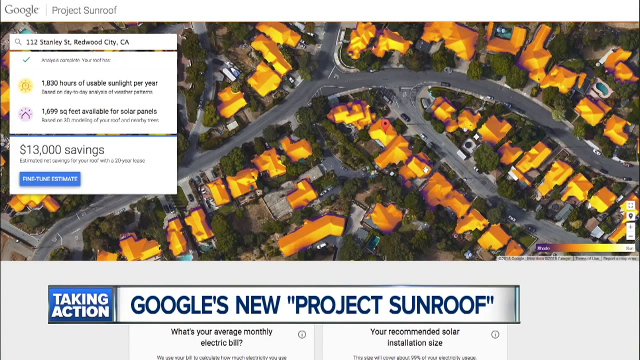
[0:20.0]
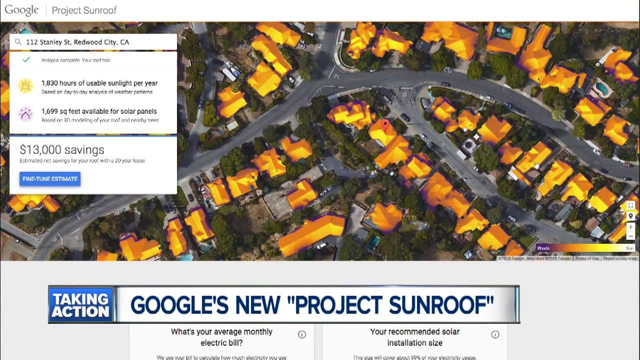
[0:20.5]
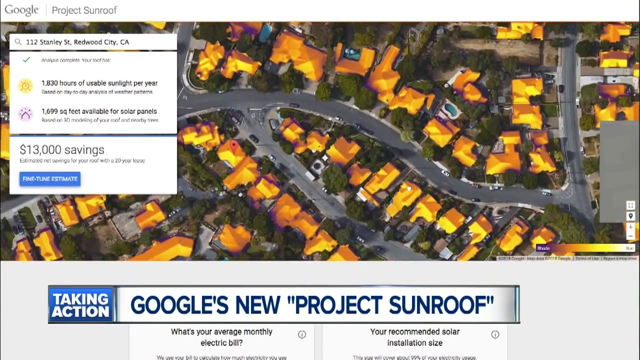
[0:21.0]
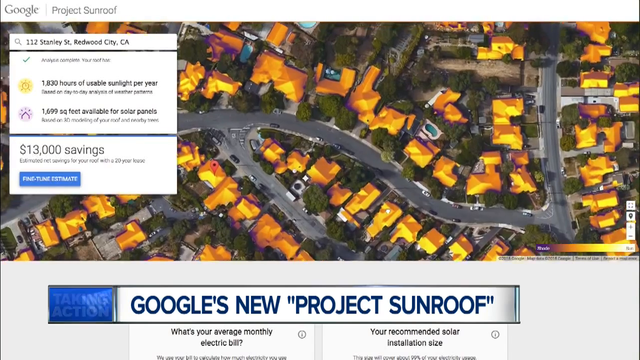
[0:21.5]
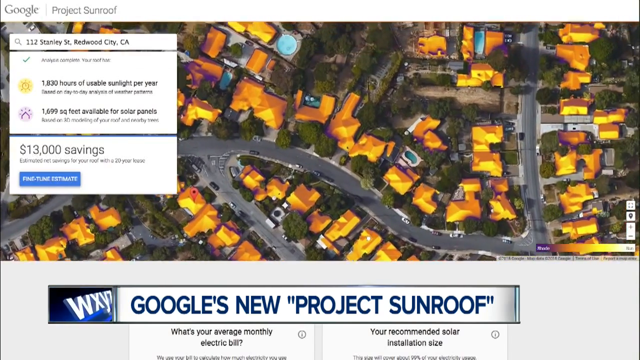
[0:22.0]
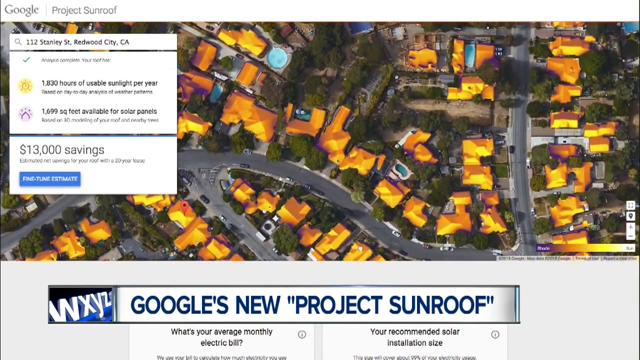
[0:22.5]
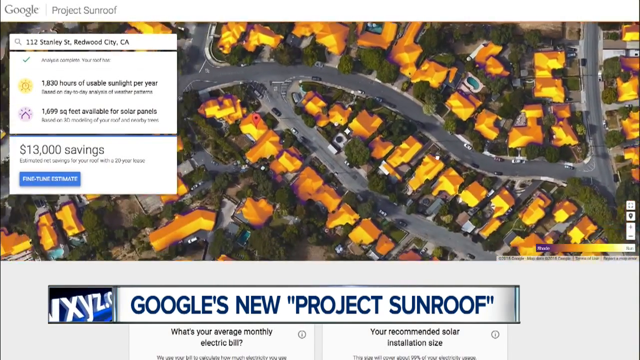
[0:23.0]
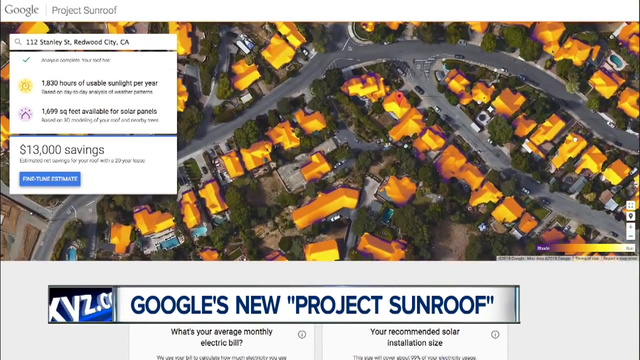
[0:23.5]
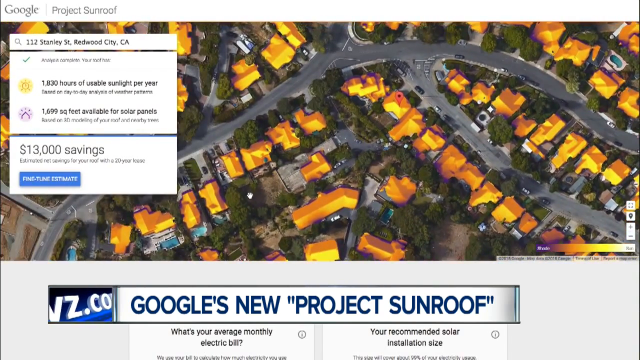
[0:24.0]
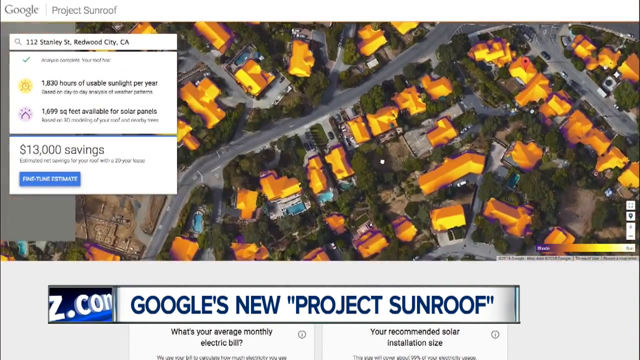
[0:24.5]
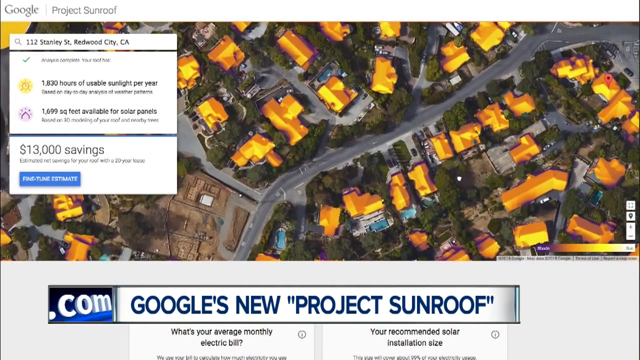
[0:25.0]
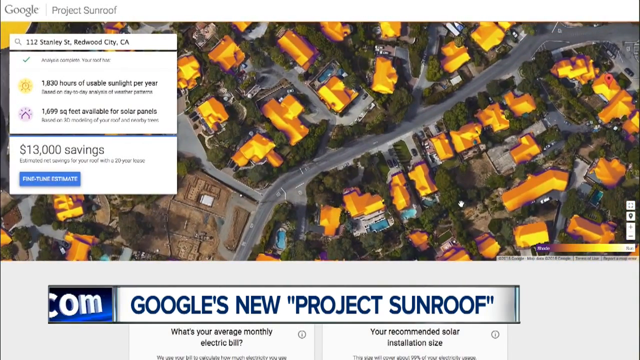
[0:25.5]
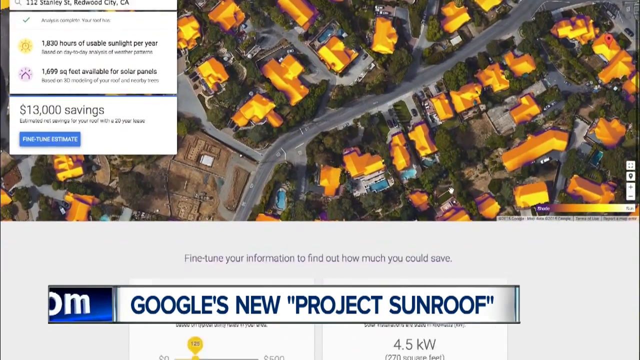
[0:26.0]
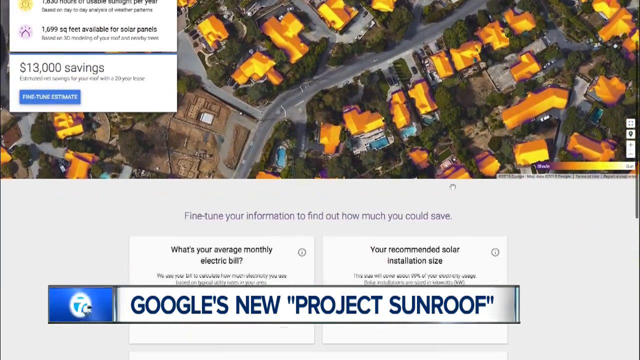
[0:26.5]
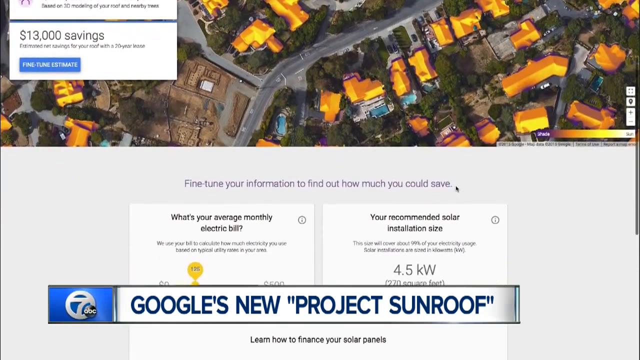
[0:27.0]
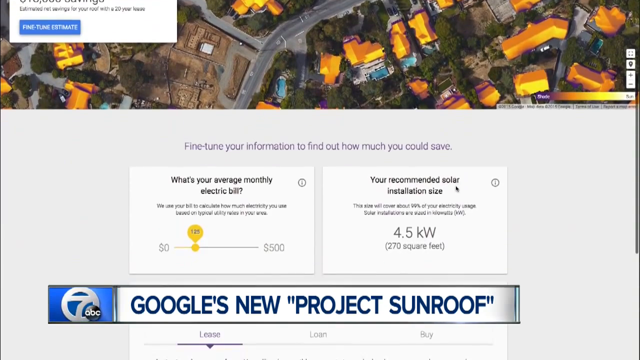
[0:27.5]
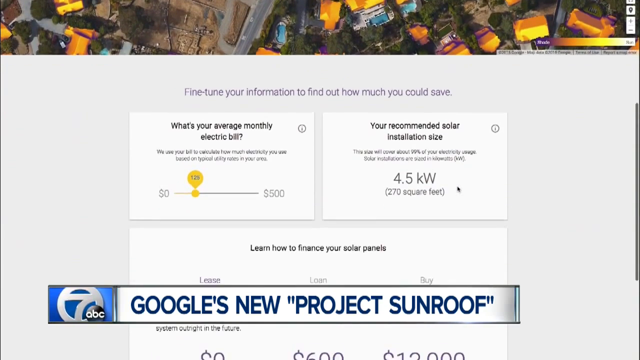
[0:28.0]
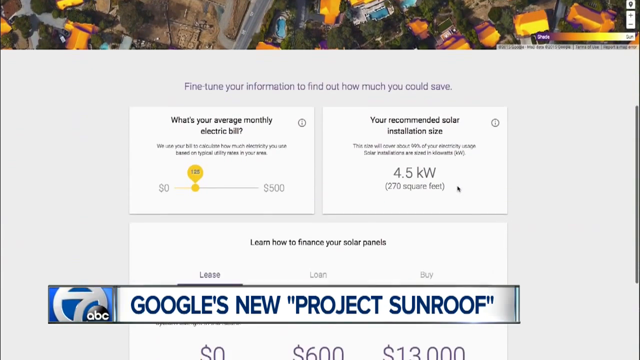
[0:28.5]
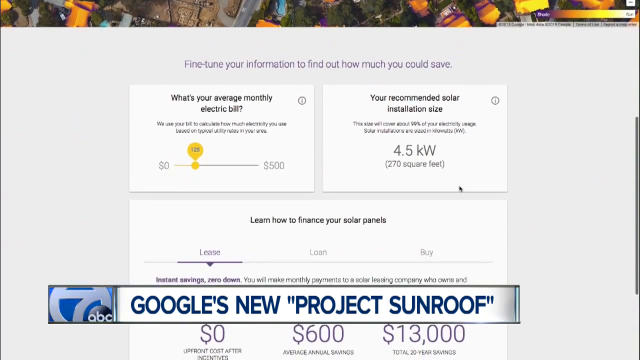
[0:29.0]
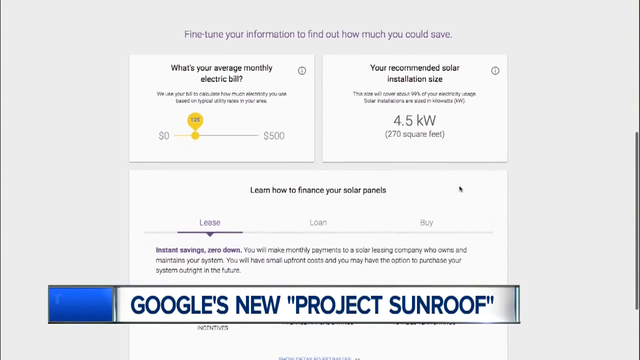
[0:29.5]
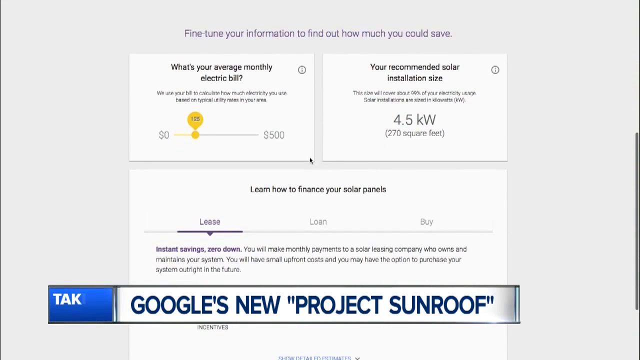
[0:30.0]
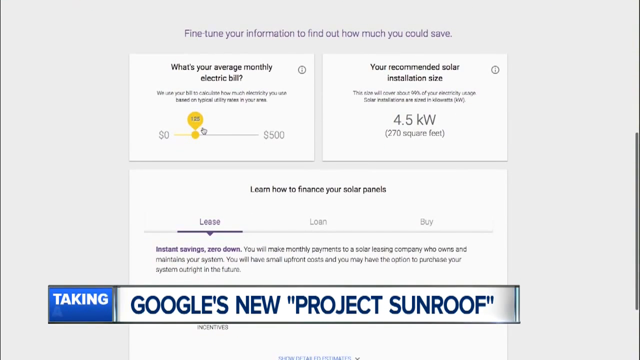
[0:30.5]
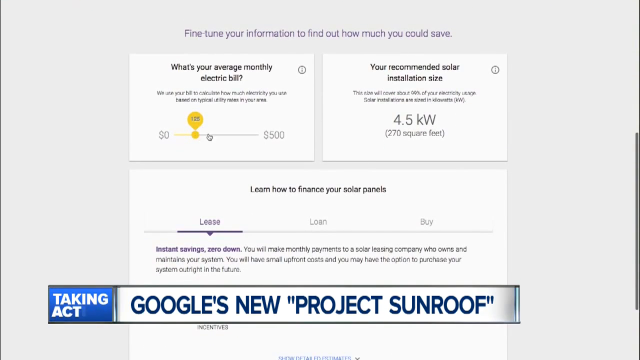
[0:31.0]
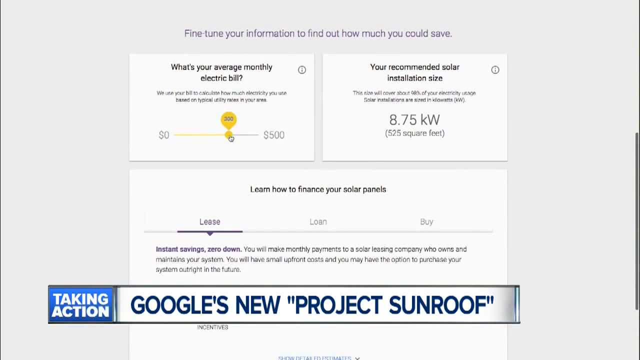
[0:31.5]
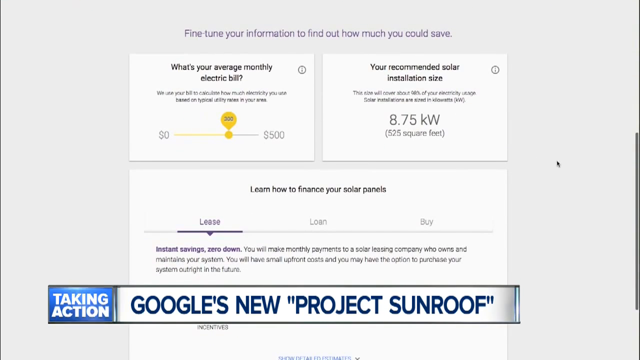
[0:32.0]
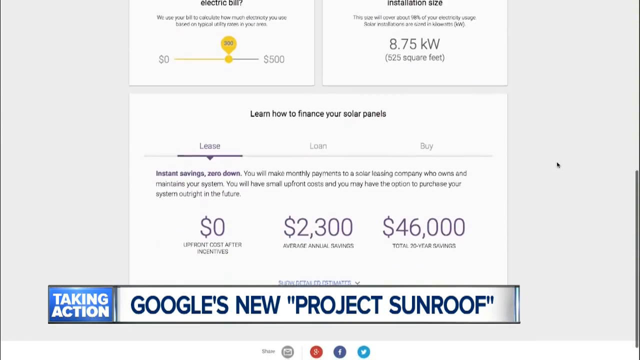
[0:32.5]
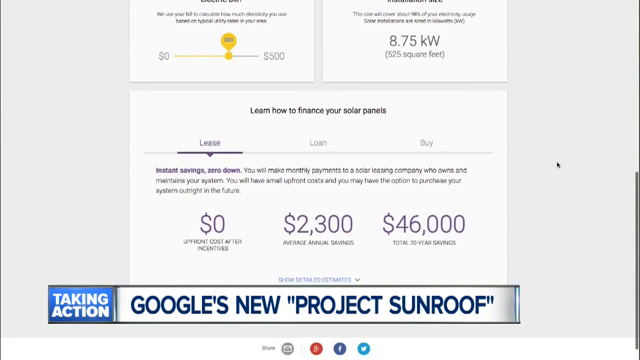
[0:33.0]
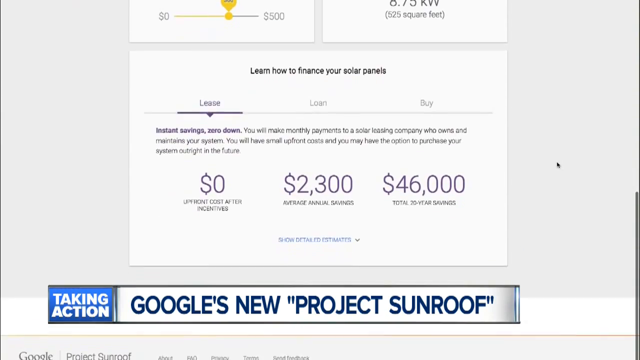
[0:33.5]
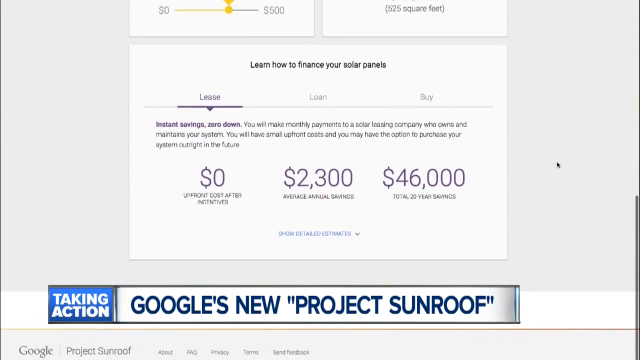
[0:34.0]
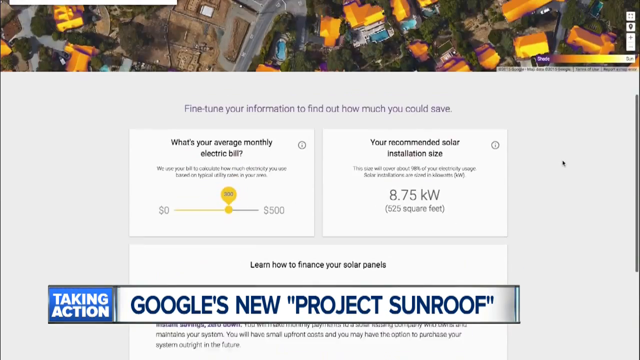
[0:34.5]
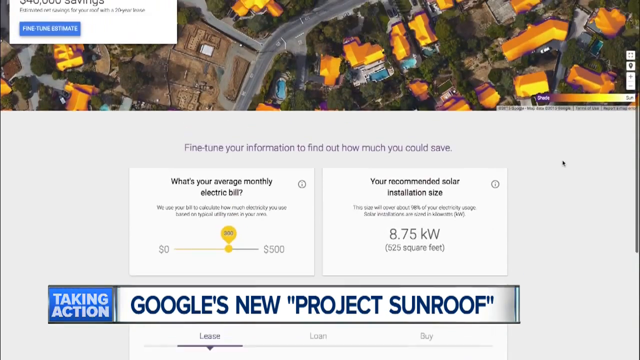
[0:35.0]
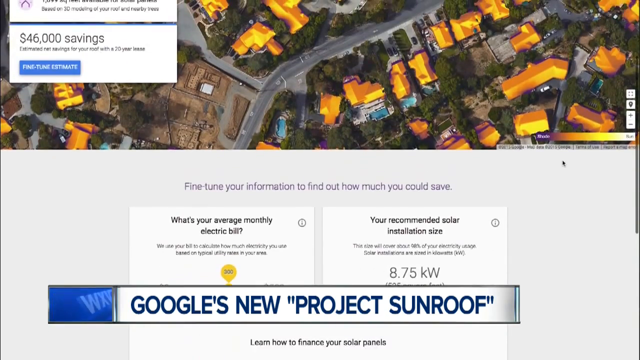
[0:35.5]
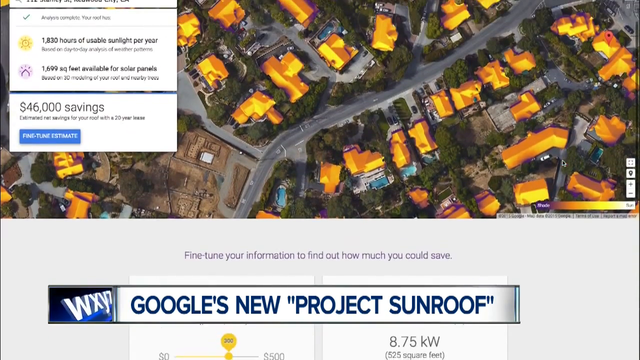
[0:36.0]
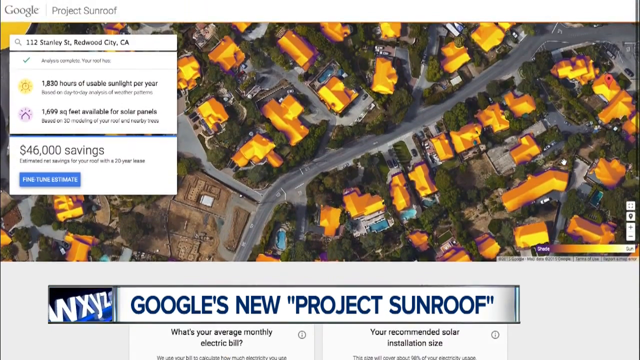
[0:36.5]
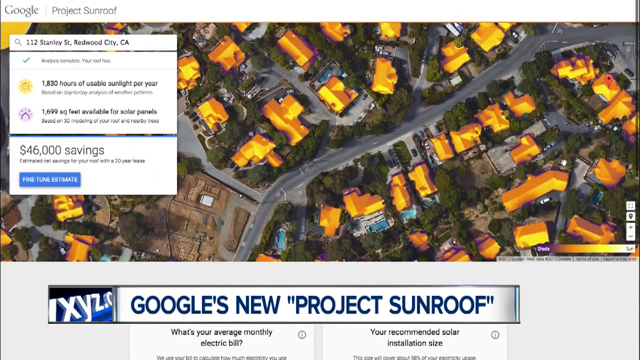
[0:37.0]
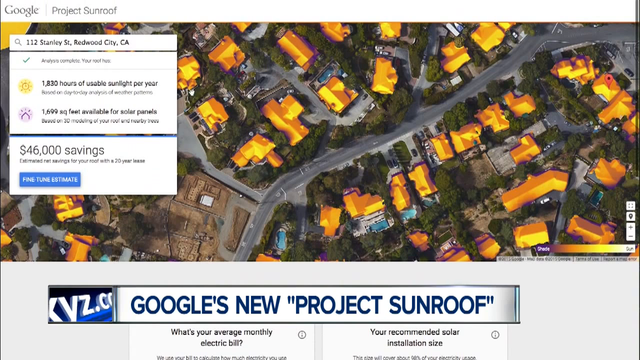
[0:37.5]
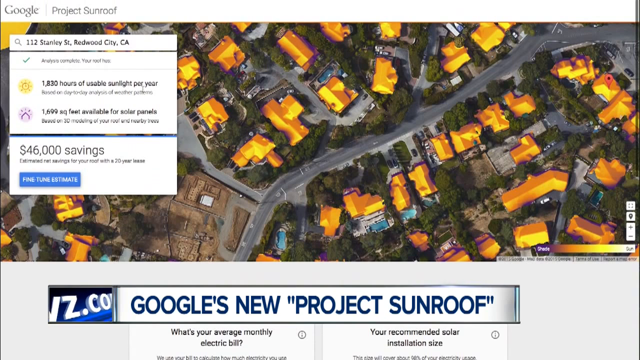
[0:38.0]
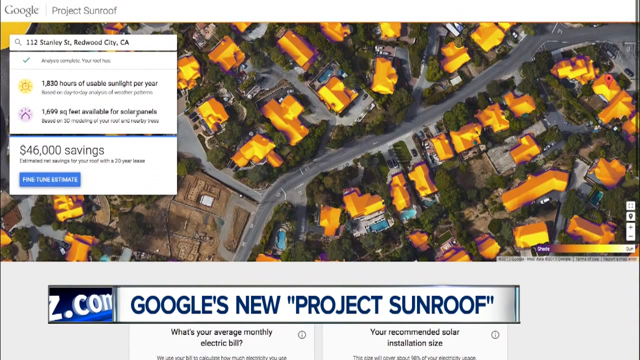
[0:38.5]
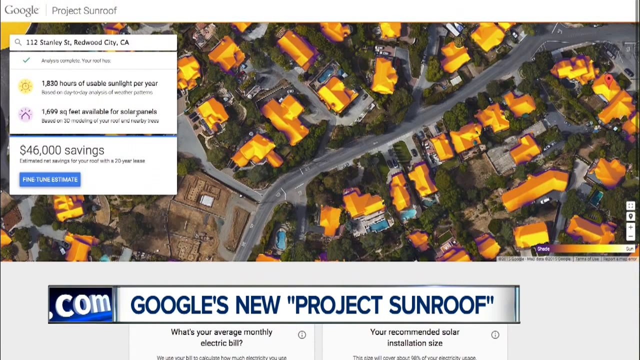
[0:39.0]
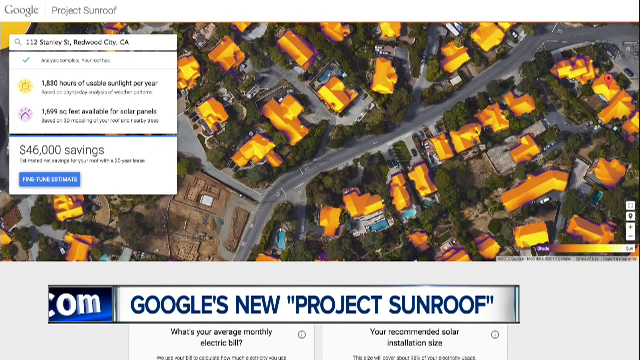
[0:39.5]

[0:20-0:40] An overhead view looks down on what appears to be a suburb, with houses of all different shapes and sizes that look like those of a nice suburb. A pool is visible, and each house has a goldish roof. At the bottom, blue letters read "Google's new 'Project Sunroof'", with Project Sunroof in quotation marks, and at the top right is the address "112 Stanley street Redwood city, CA". The screen scrolls up to show two rectangular boxes. The one on the right, almost in the middle of the screen, reads "what's your average monthly electric bill?" and has the numbers 0 through 500 with a small yellow slider stopped a little before the middle. The box to its left reads "your recommended solar installation rate", with "4.5 kilowatts" underneath. Below these two boxes is a longer rectangular box, and all three boxes are centered on the screen. The long box reads "learn how to finance your solar panels", with "lease", "loan" and "buy" underneath, and a dark line under "lease". The screen scrolls up further, showing "$0" underneath lease, "$2,300" underneath loan, and "$46,000" underneath buy. The screen then scrolls back to the overhead view of the suburb, where all the roofs are a goldish yellow.